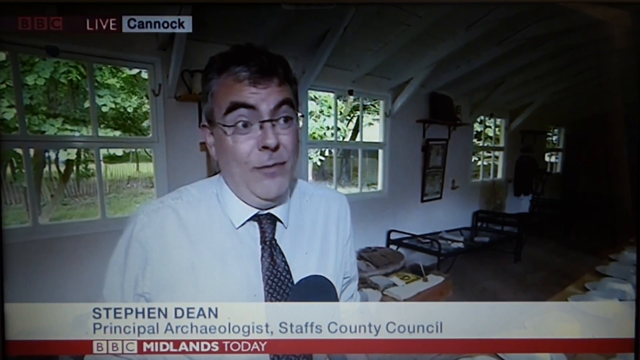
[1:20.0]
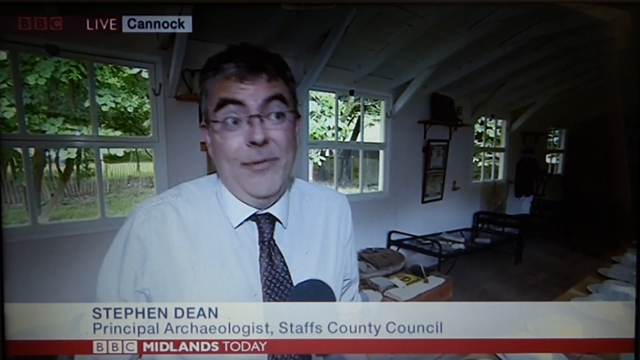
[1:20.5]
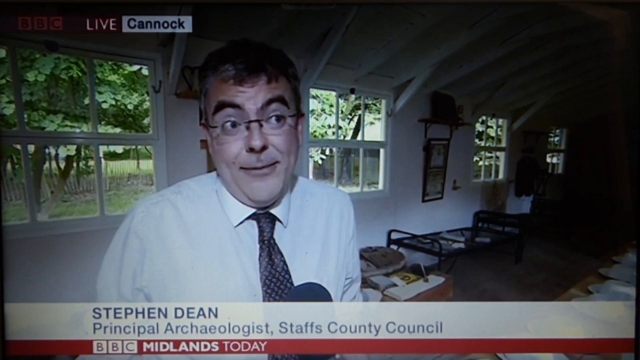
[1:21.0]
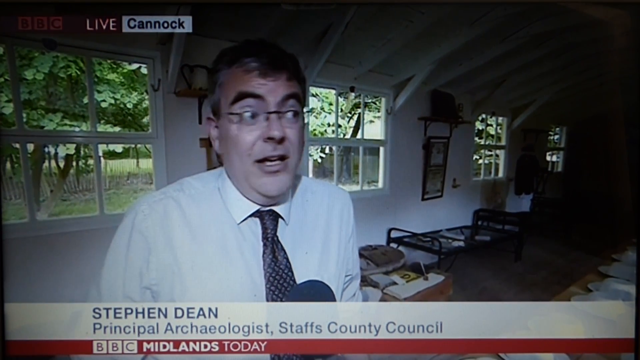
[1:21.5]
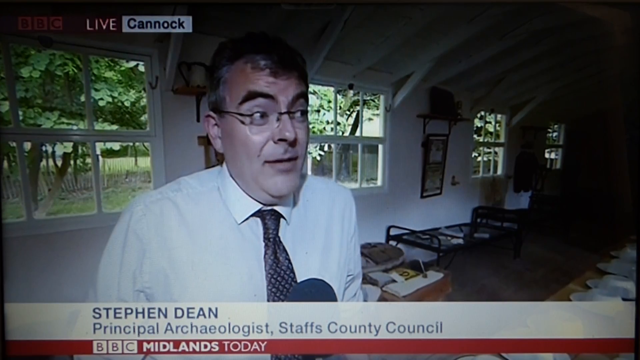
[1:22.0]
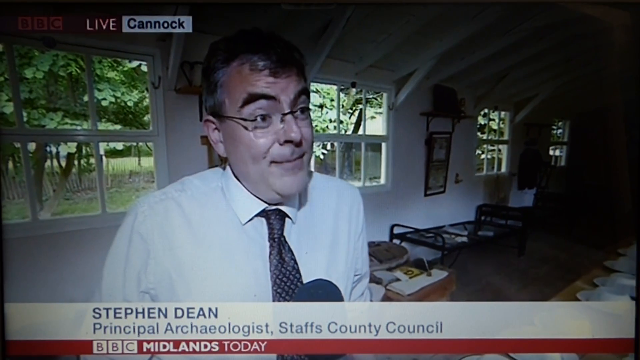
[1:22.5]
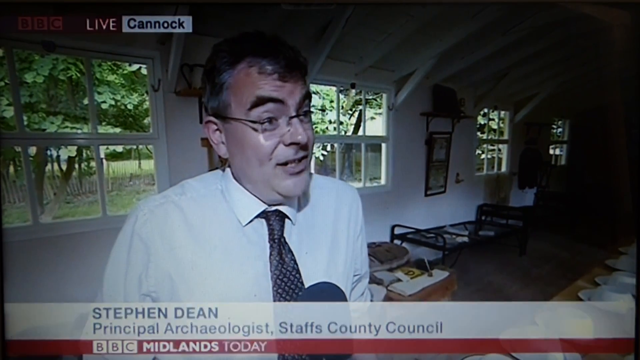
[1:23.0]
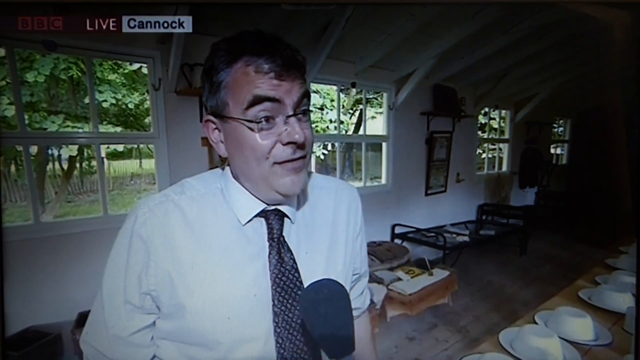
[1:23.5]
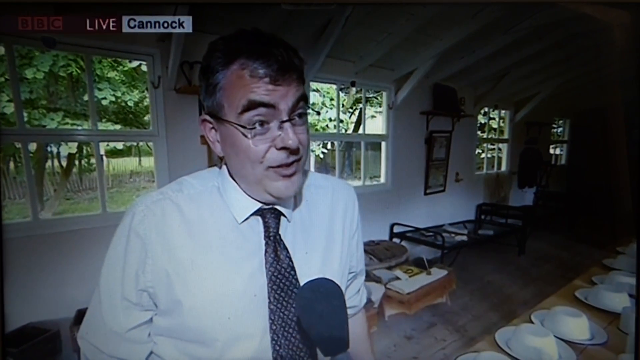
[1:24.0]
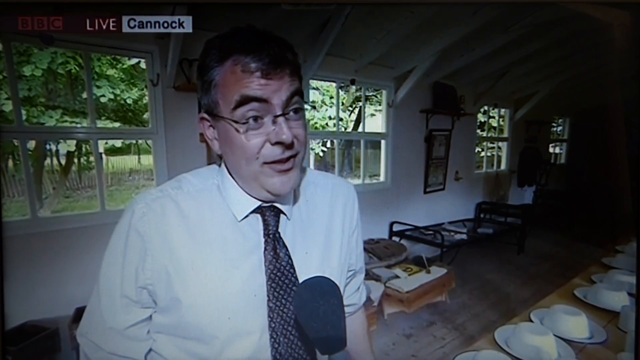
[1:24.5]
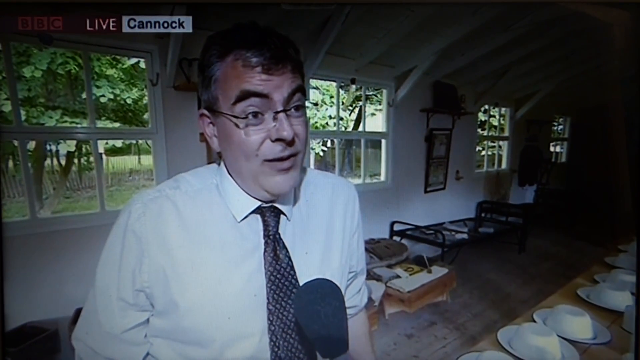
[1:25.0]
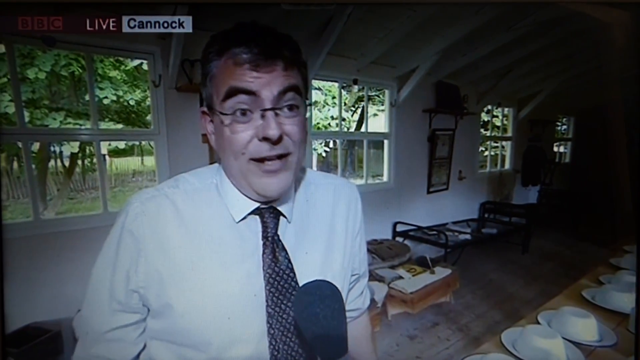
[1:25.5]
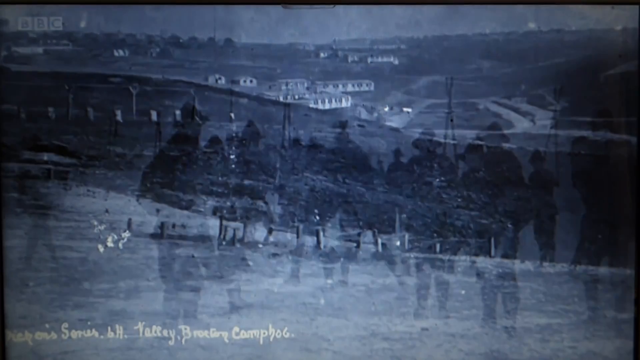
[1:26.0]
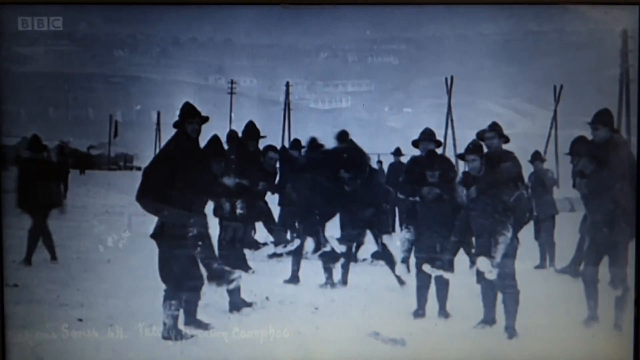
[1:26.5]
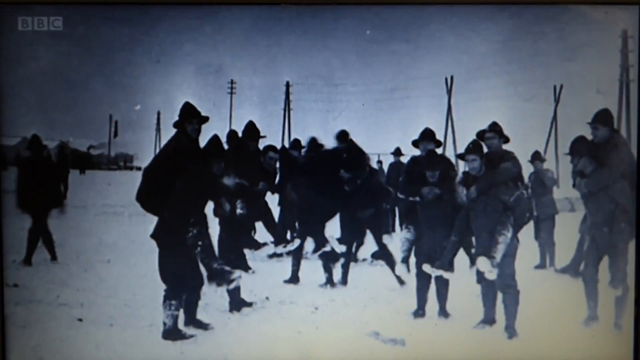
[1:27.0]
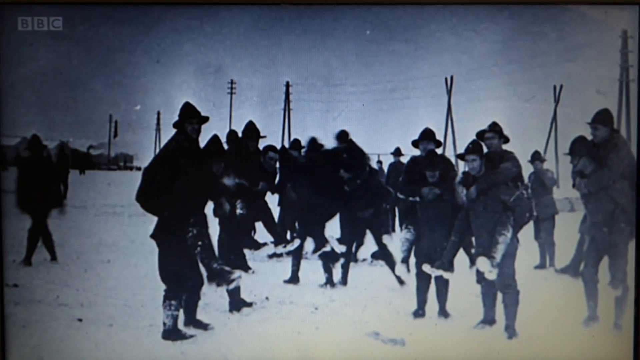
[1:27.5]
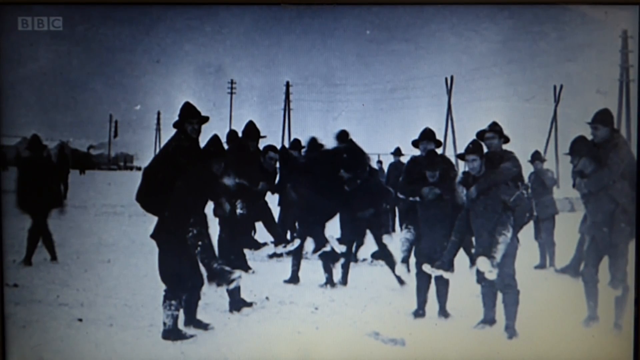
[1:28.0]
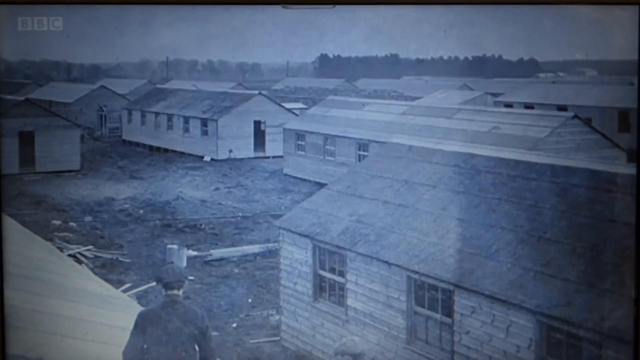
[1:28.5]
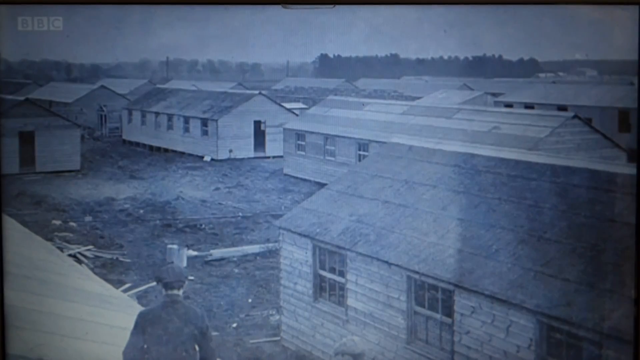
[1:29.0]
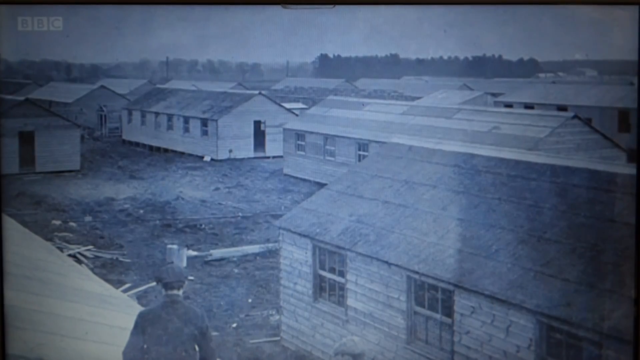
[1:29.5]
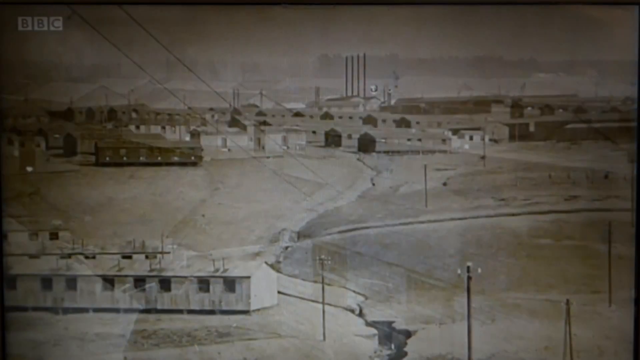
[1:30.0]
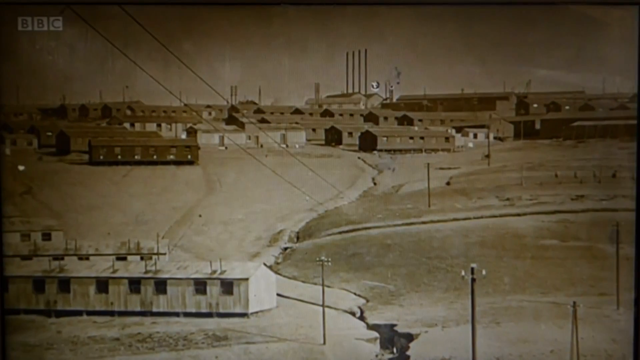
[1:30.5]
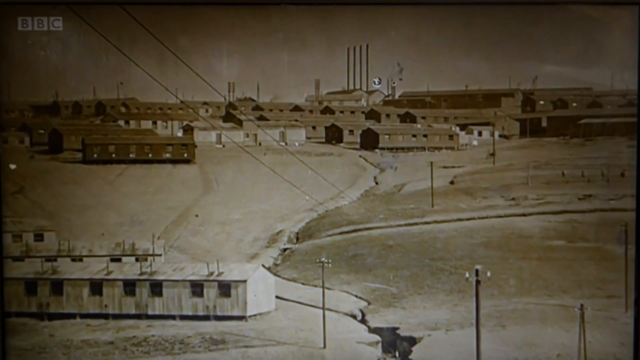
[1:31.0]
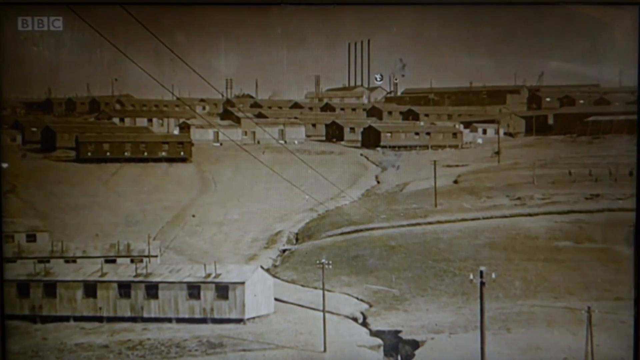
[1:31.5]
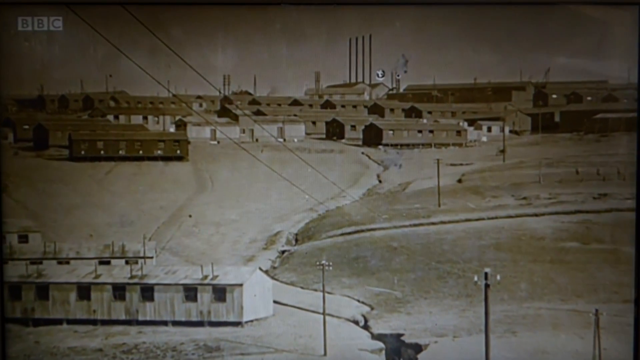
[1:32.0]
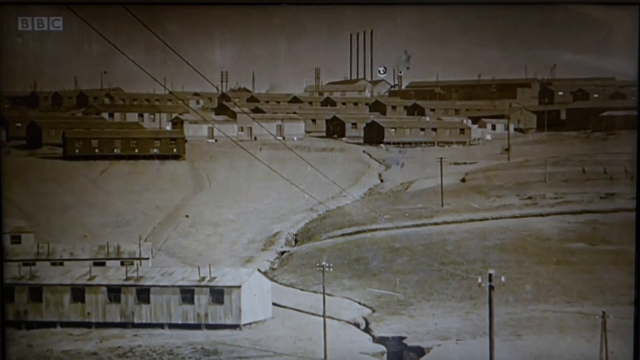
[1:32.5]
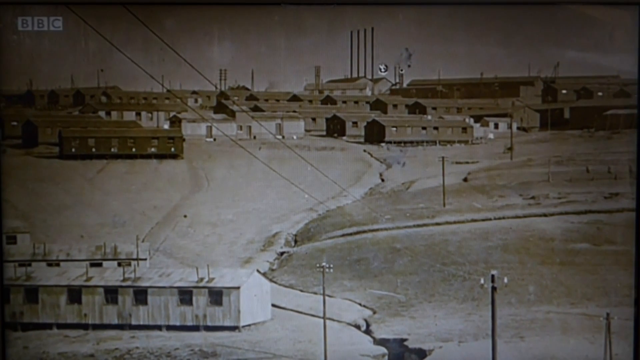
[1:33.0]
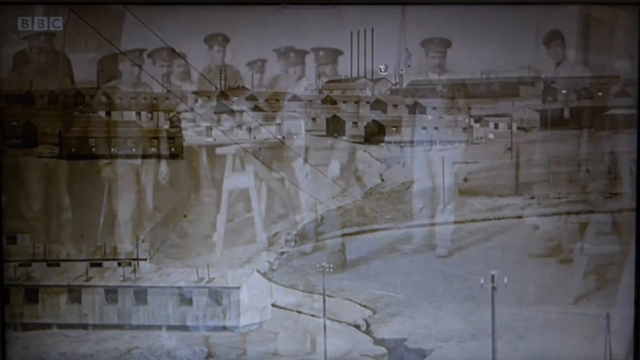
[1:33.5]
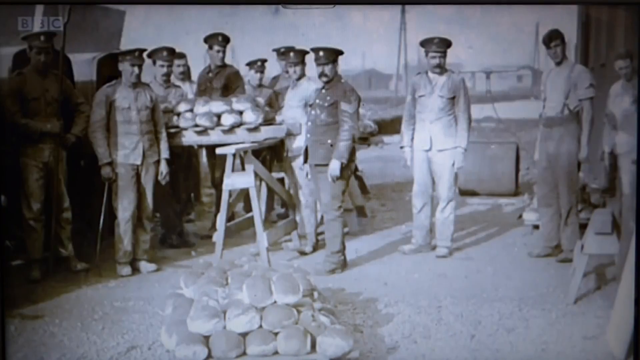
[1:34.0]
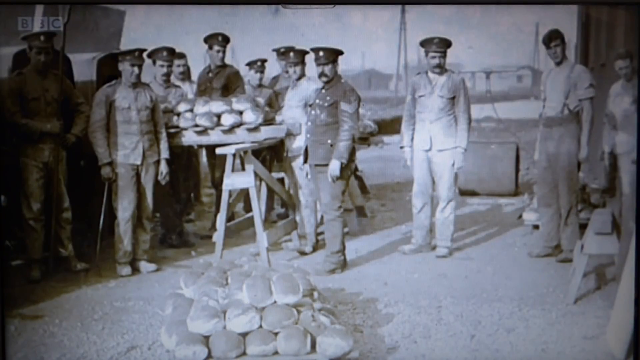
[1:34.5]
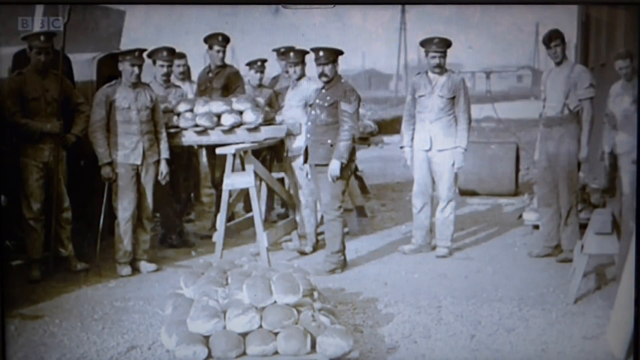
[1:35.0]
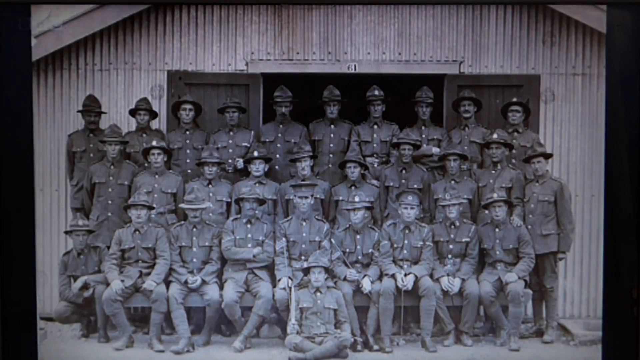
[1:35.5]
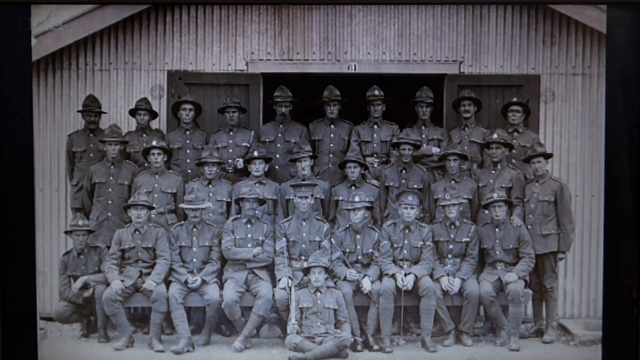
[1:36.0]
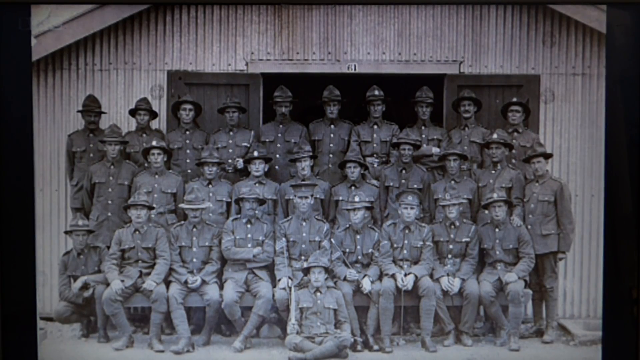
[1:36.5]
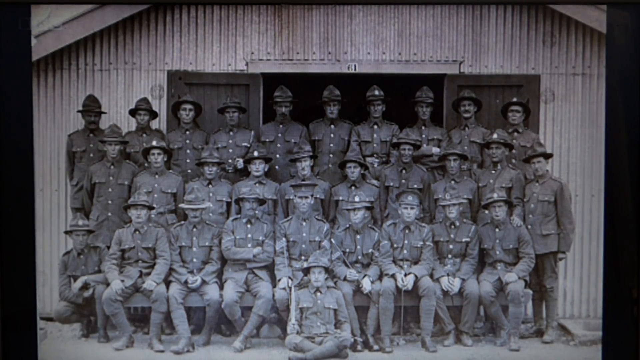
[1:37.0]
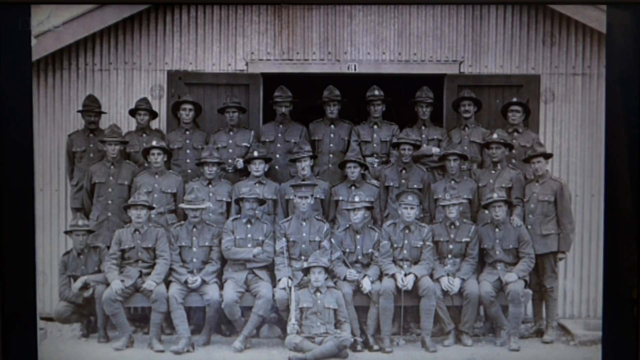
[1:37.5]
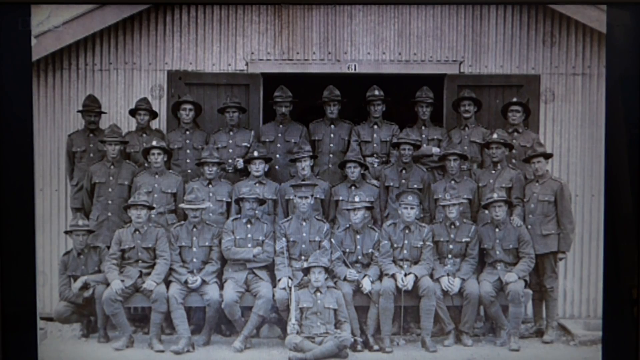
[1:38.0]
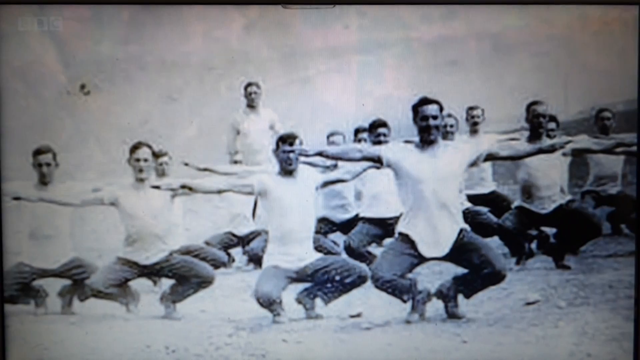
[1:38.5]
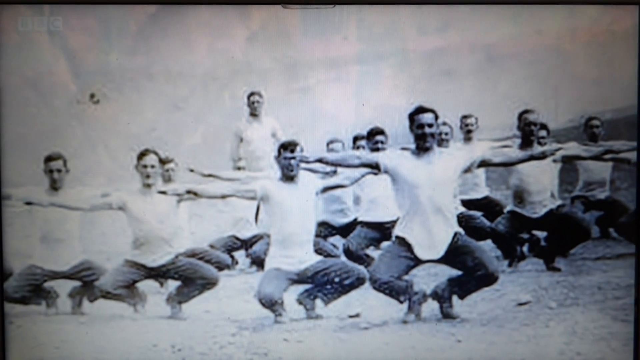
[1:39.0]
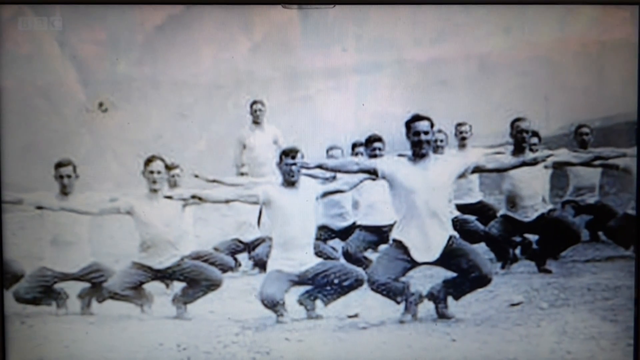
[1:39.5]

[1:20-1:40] Stephen Dean, a principal archaeologist at Staffs County Council, joins the journalist. He wears eyeglasses, has short hair and light skin, and wears a long-sleeve white shirt with a black spotted tie. A series of old pictures is shown: soldiers in snow wearing warm clothes, together with their colleagues, and the houses where they slept, all built to the same pattern.